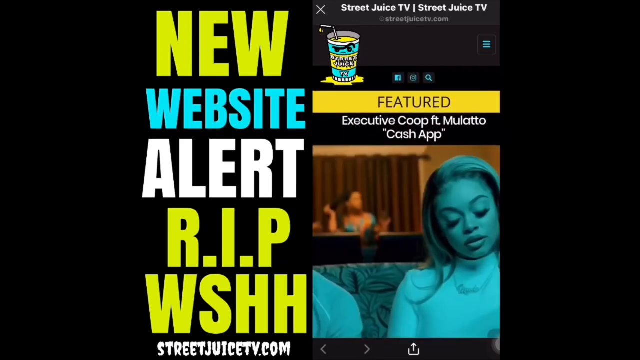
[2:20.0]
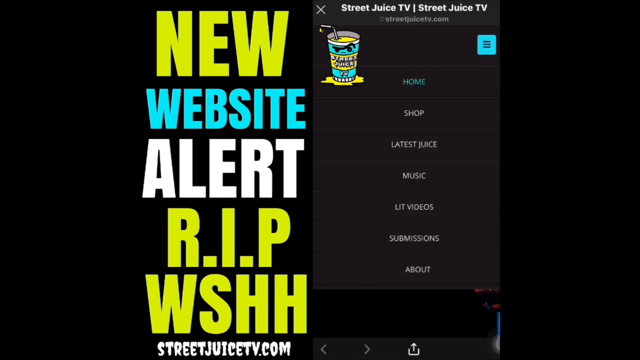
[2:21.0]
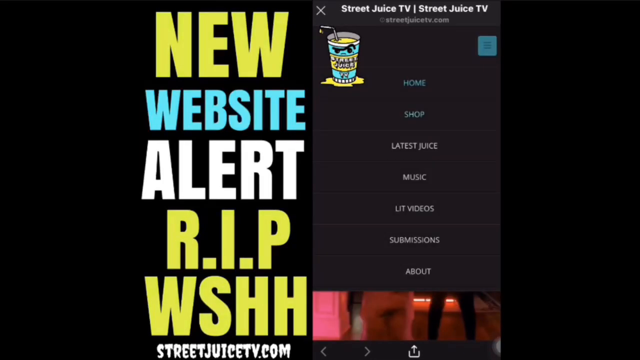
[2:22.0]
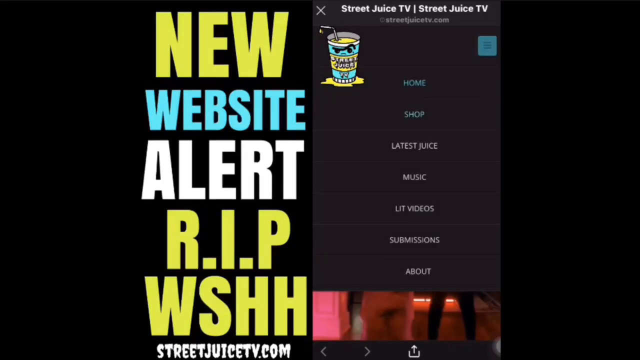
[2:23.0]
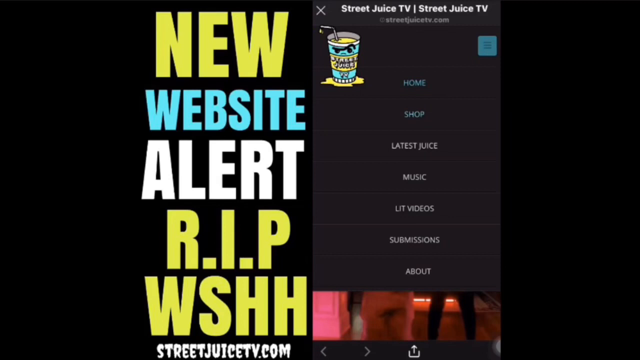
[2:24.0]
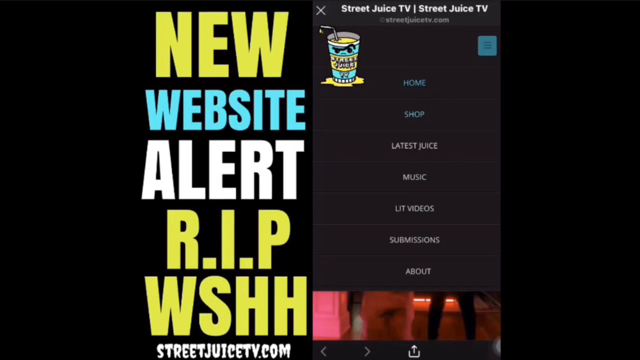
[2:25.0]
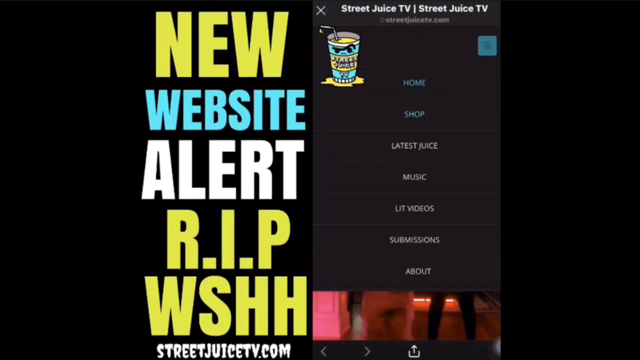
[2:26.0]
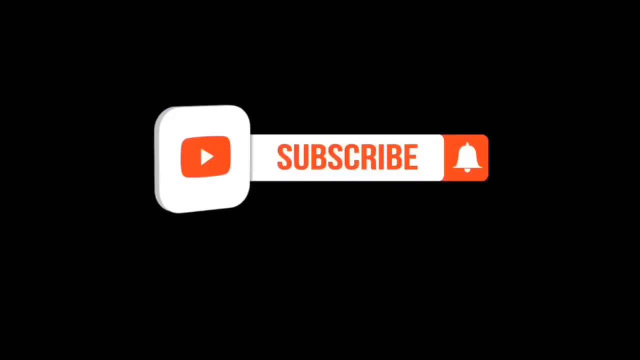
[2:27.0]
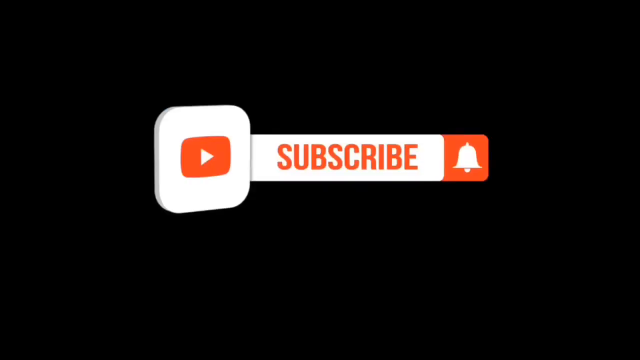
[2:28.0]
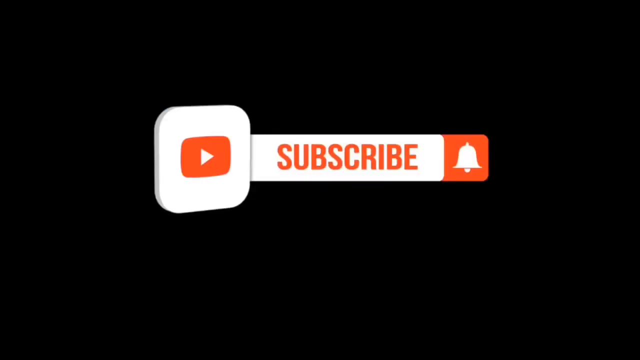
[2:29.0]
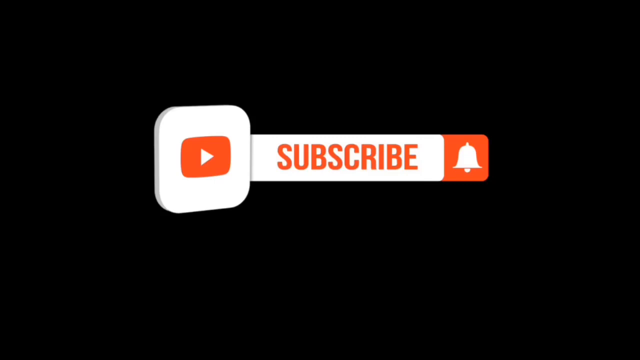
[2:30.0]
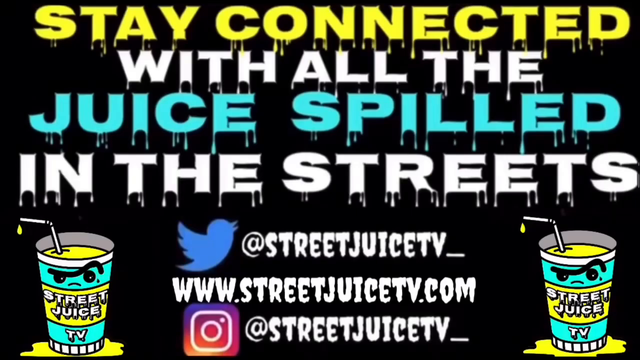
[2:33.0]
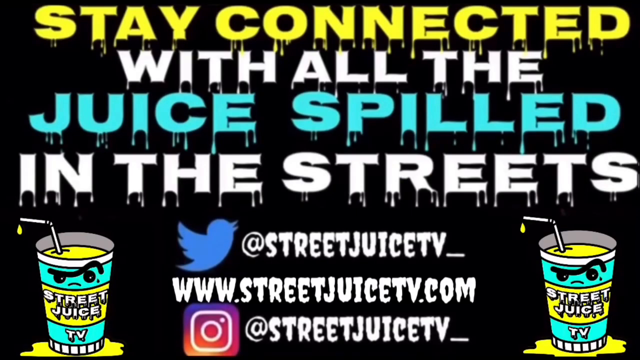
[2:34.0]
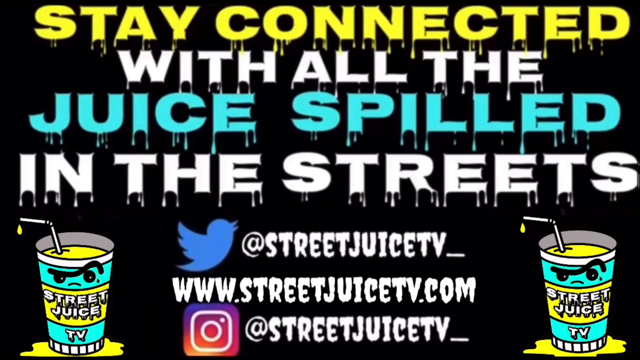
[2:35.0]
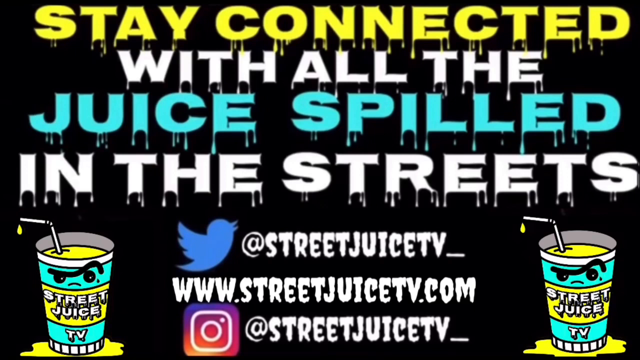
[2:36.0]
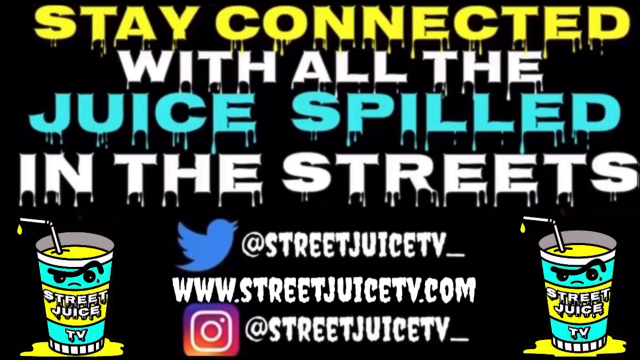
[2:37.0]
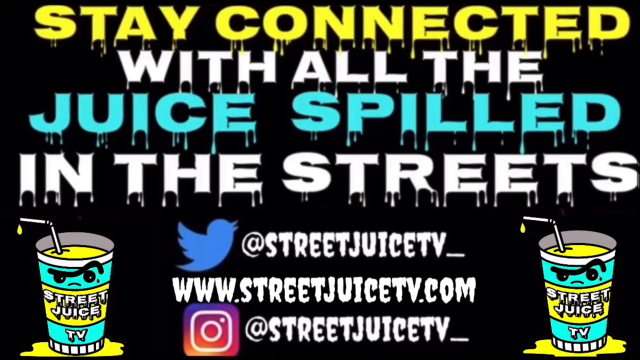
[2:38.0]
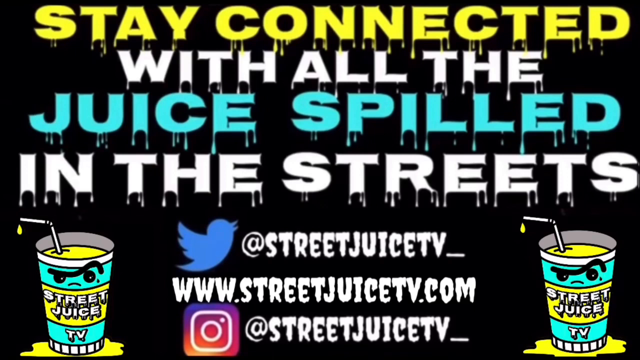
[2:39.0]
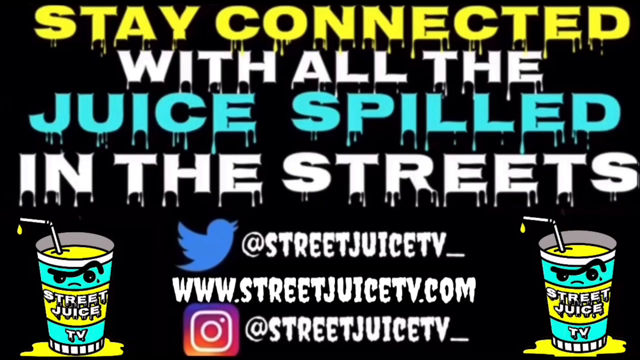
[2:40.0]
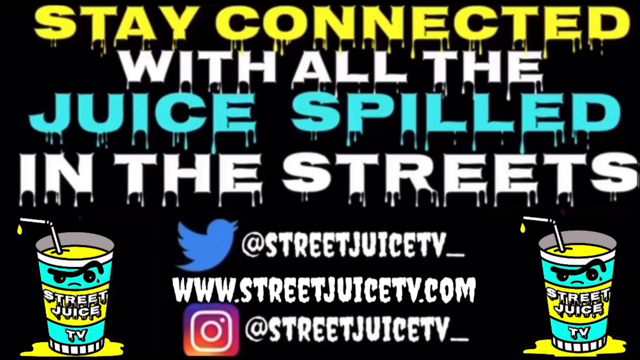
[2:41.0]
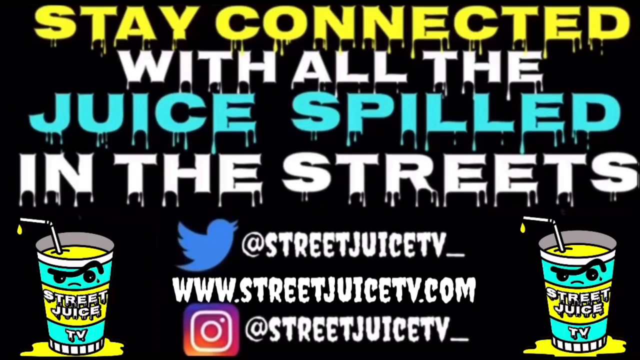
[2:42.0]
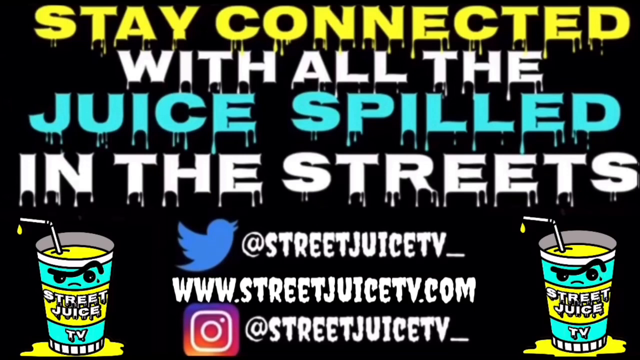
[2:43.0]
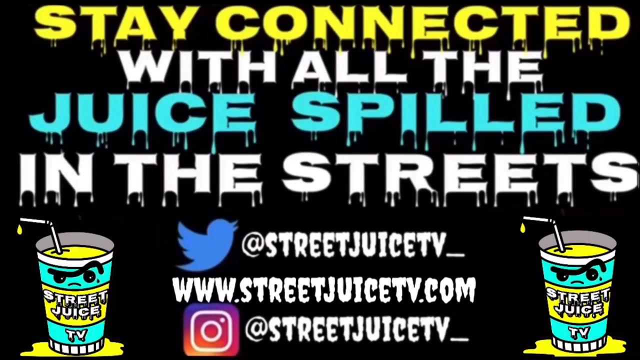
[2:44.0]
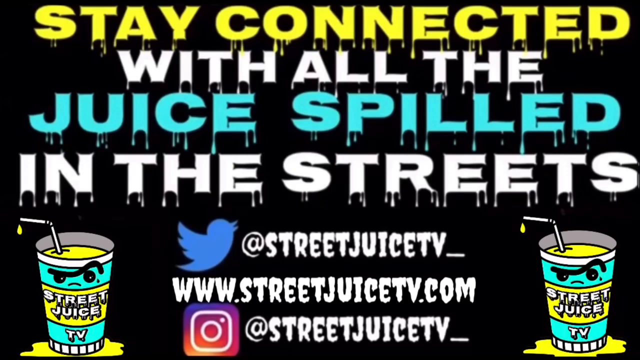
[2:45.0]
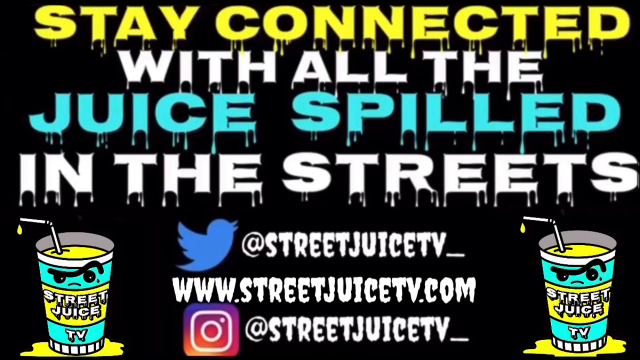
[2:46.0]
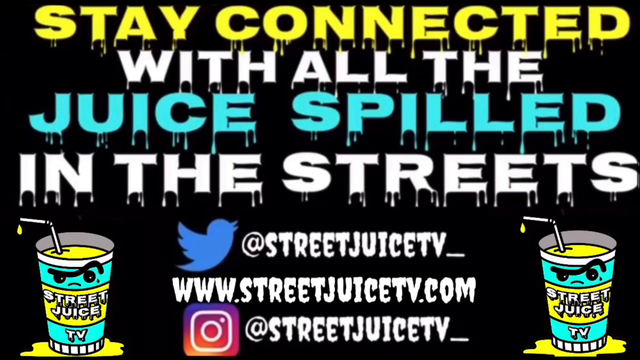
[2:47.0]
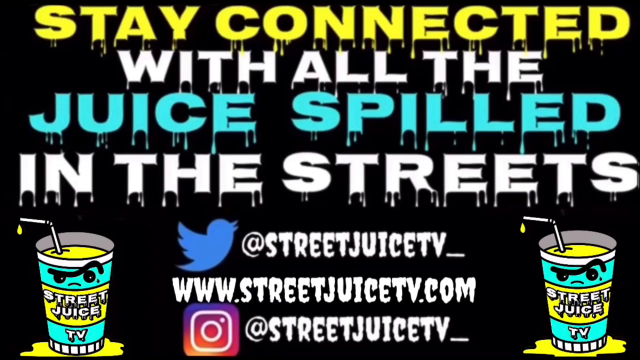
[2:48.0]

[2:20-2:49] The split screen continues with the text and the feed of presumably a screen recording from a phone. The menu in the top right is clicked again and stays open for several moments, showing the list of options, with the drawing of the cup of juice in the upper left corner of the feed. The video then abruptly transitions to a black screen with a graphic in the center showing a YouTube icon, the word "Subscribe", and a bell icon, which stays for several moments. Next comes a page that says "stay connected with all the juice spilled in the streets", listing a Twitter handle, a website, and an Instagram name at the bottom center, with the drawing of the cup of juice, its face and the little yellow droplet coming down from the straw, on the bottom left and right. This screen remains for the last several seconds of the video.